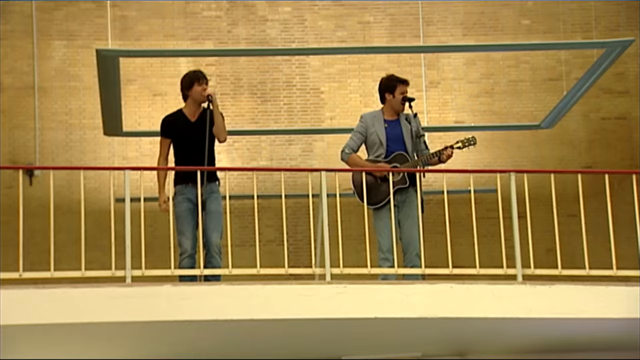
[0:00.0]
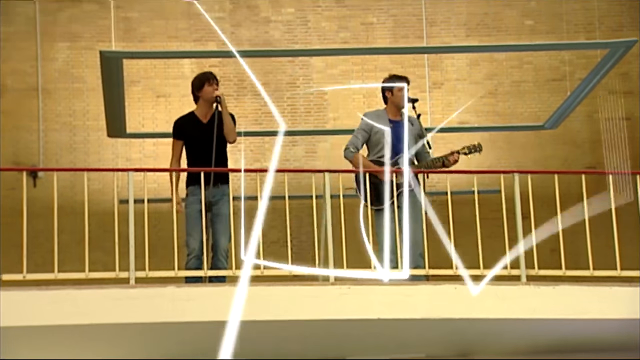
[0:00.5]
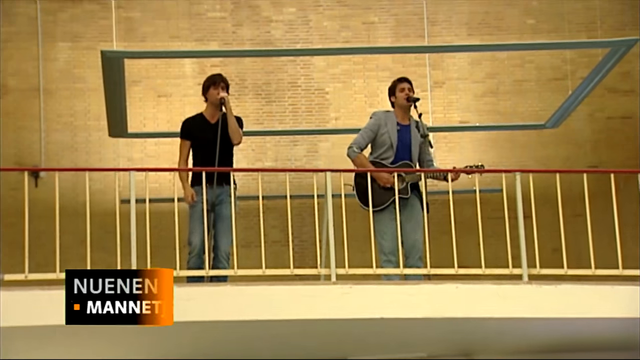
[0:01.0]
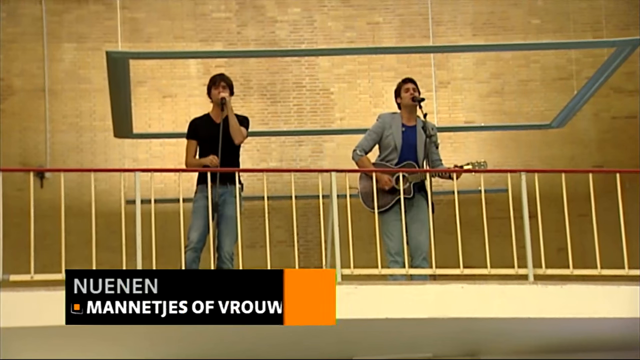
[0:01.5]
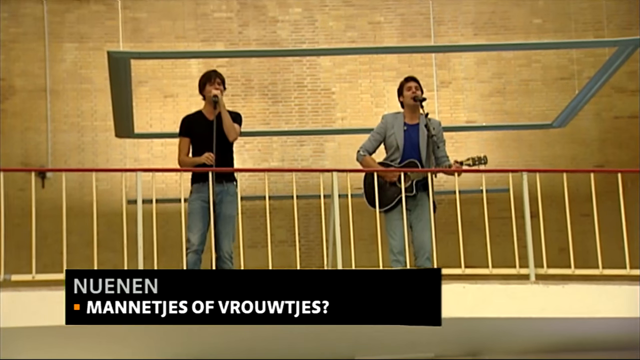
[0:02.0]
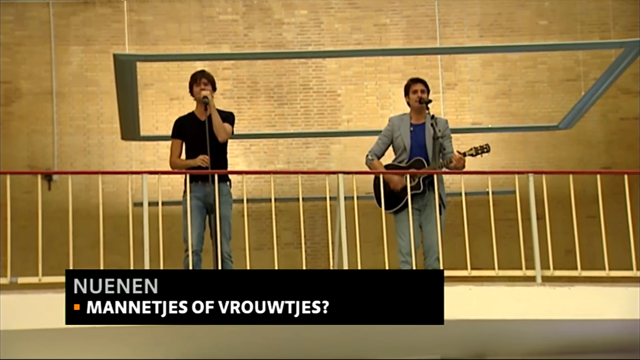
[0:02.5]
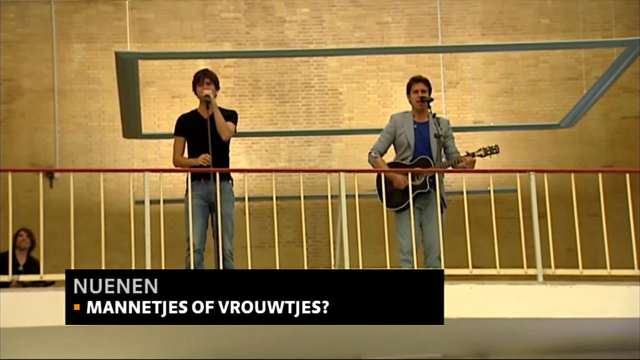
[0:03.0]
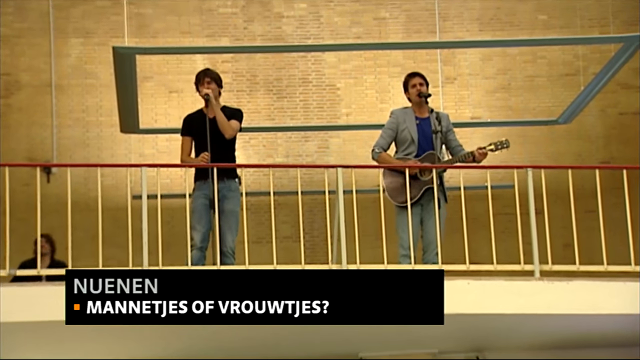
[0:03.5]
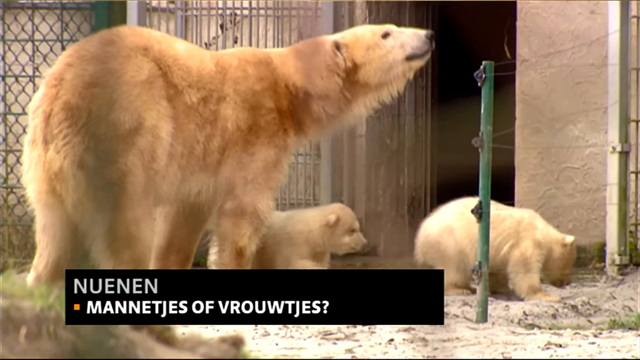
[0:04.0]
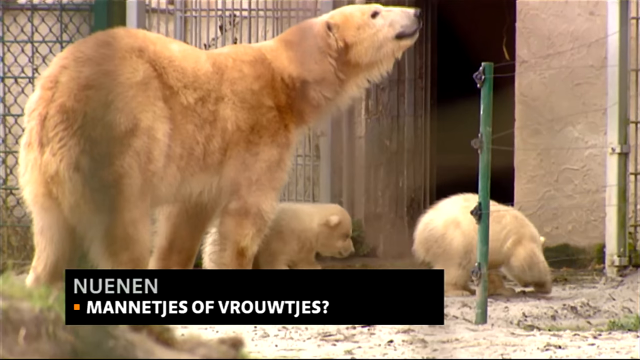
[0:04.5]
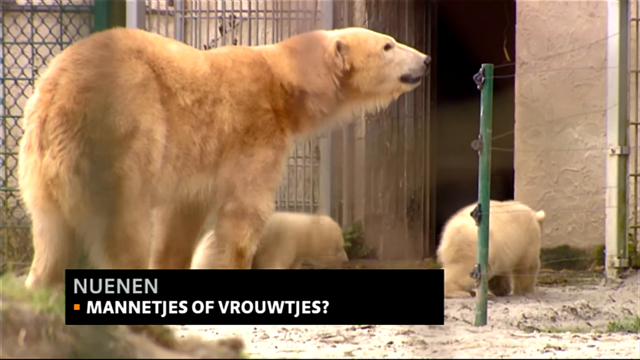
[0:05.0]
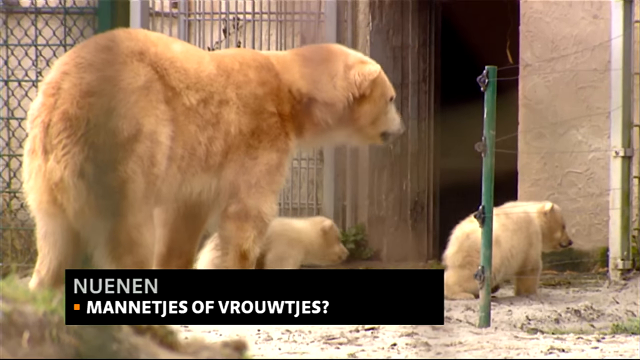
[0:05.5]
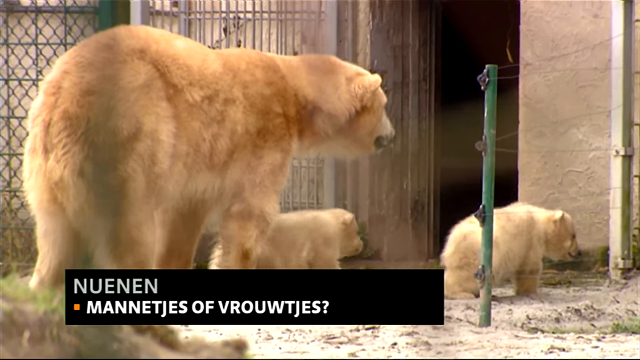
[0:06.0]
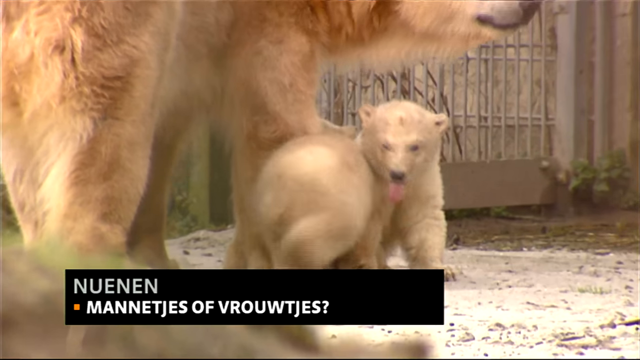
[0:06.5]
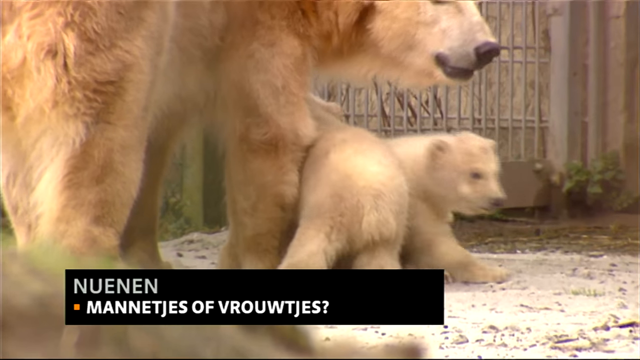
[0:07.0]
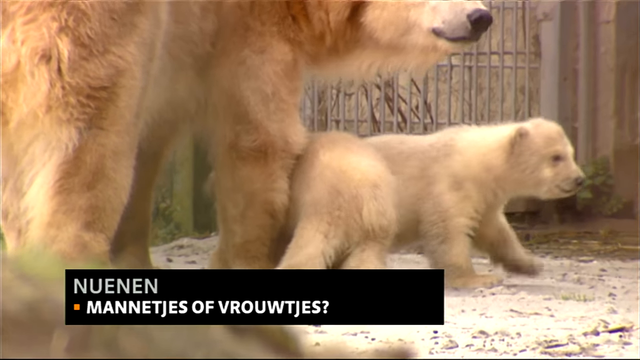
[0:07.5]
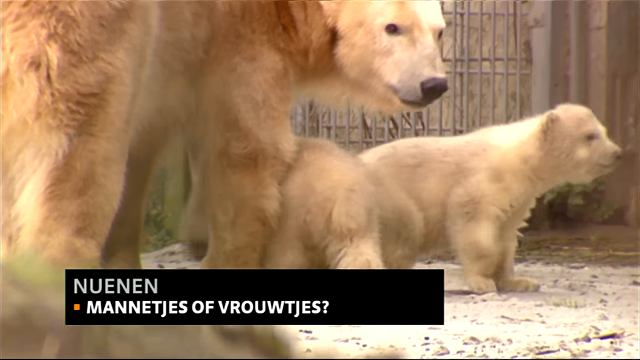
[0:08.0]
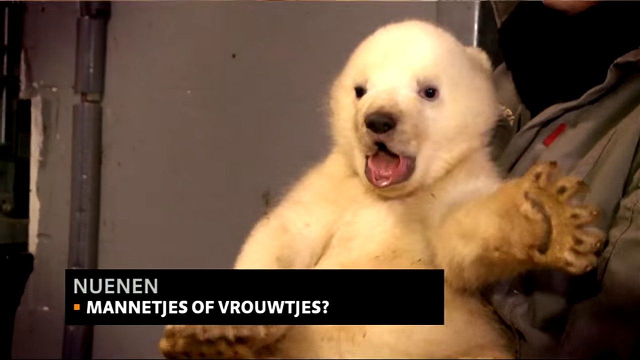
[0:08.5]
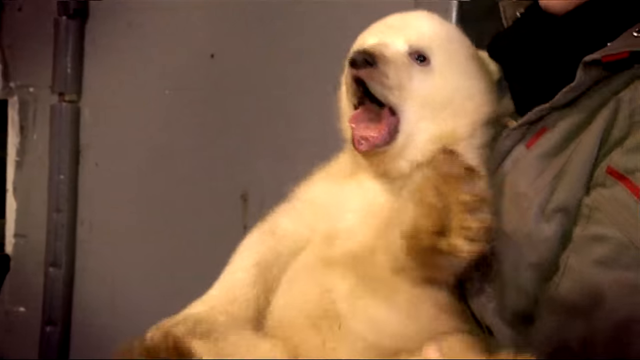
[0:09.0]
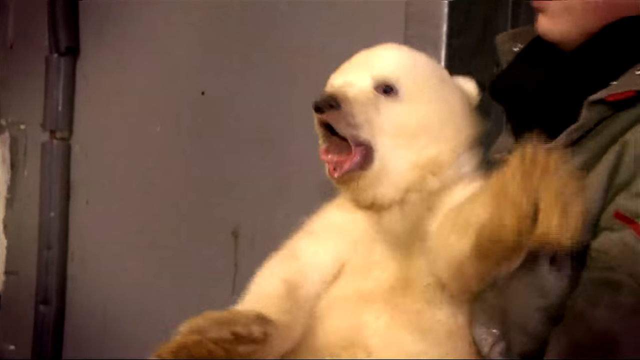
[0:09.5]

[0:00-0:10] Two singers perform on a balcony with a yellow metal fence in front of them that stops them from falling. The man on the right has a guitar, wears a grey suit and a blue t-shirt, and has a microphone. The man on the left wears a dark blue t-shirt and jeans and is also singing into a microphone. A woman appears on the balcony on the left of the screen and then disappears. Next, three polar bears appear: one grown polar bear and two baby polar bears. The two babies are moving around the older polar bear by its front legs. Then a person holds one of the polar bears in their arms; the polar bear is sitting there with its mouth open.